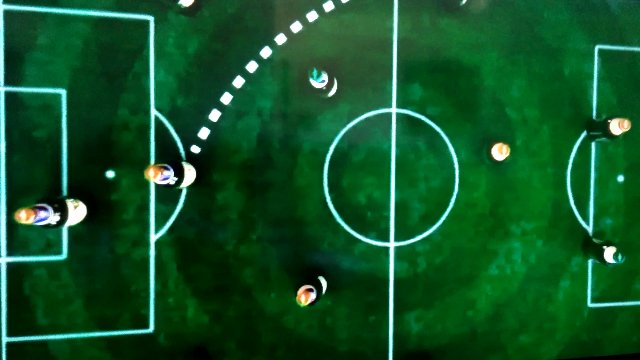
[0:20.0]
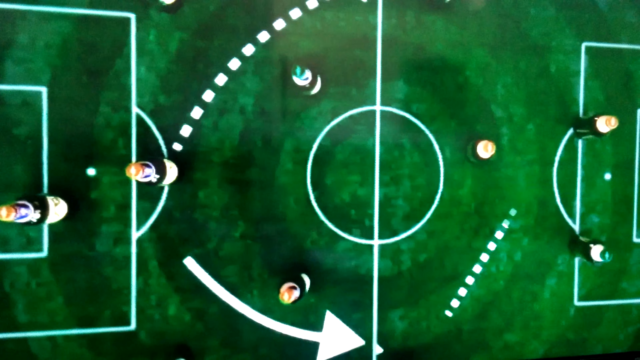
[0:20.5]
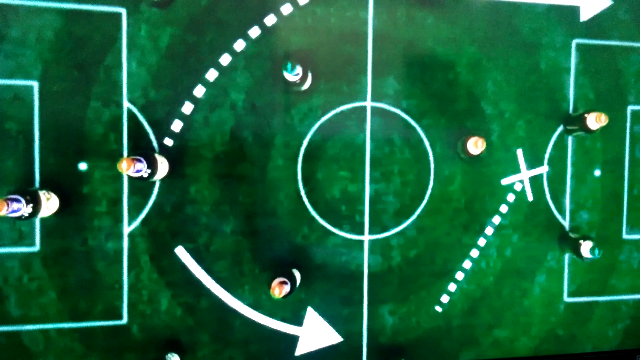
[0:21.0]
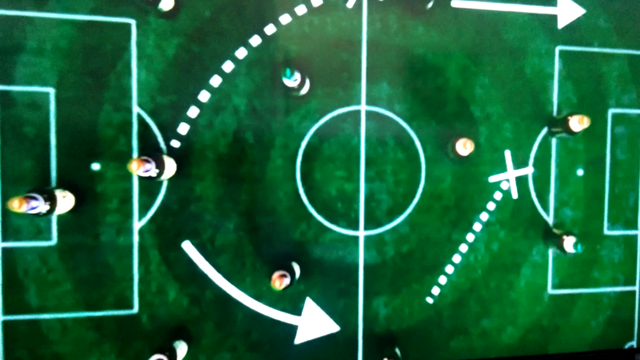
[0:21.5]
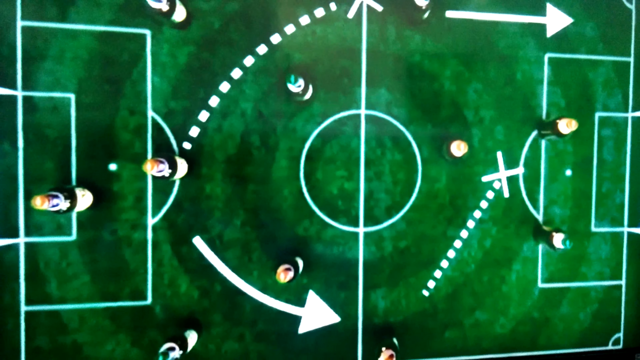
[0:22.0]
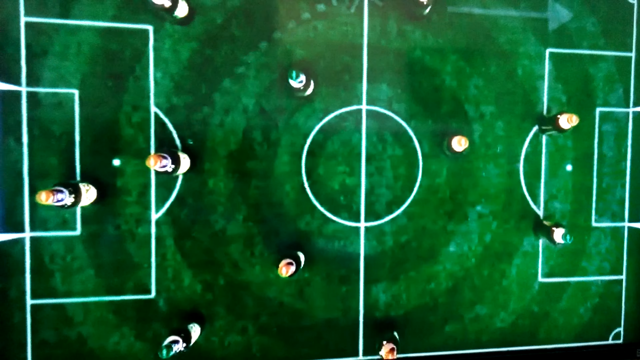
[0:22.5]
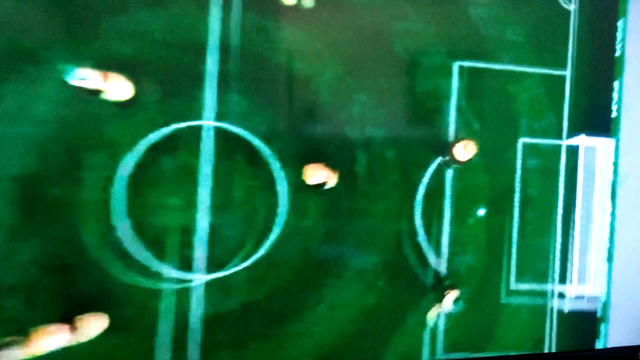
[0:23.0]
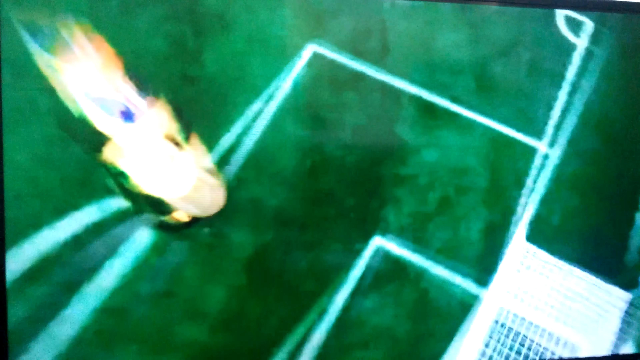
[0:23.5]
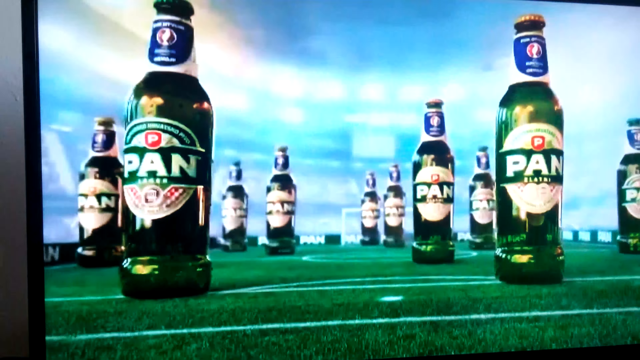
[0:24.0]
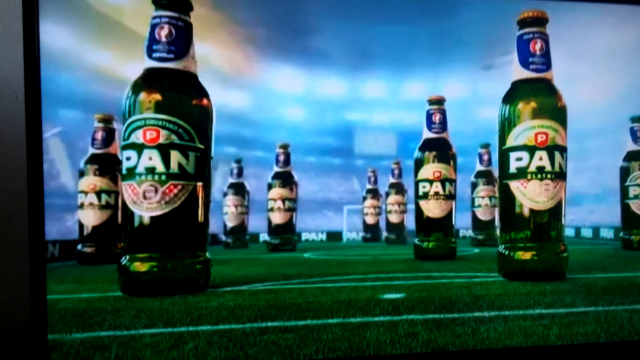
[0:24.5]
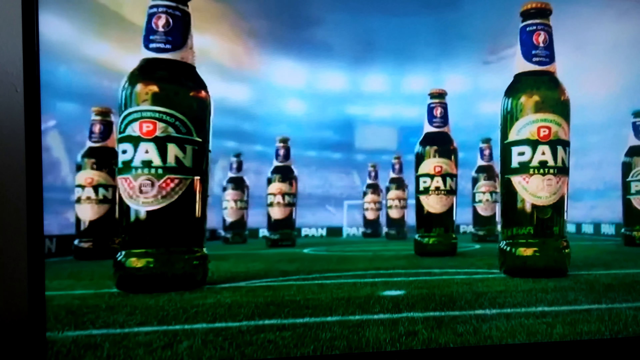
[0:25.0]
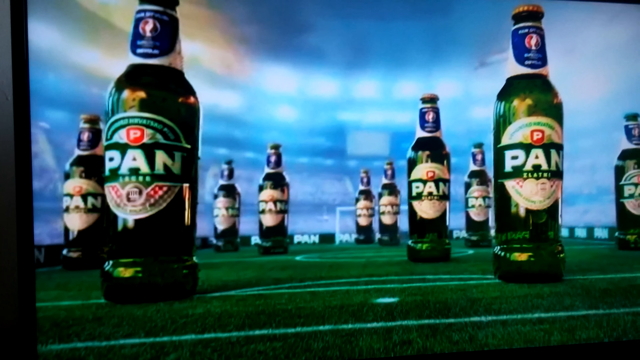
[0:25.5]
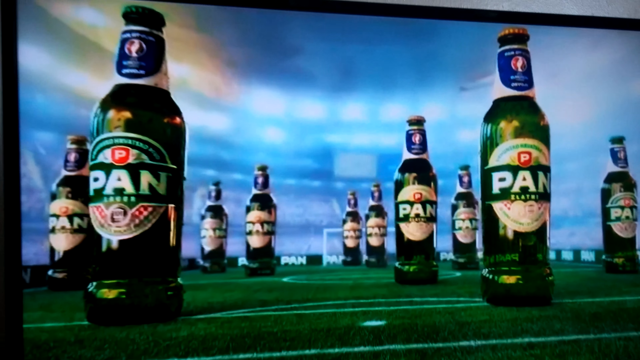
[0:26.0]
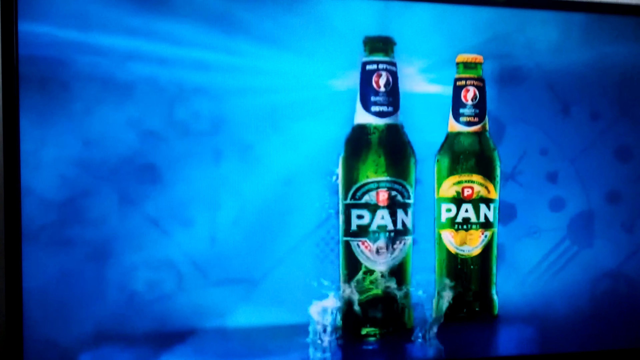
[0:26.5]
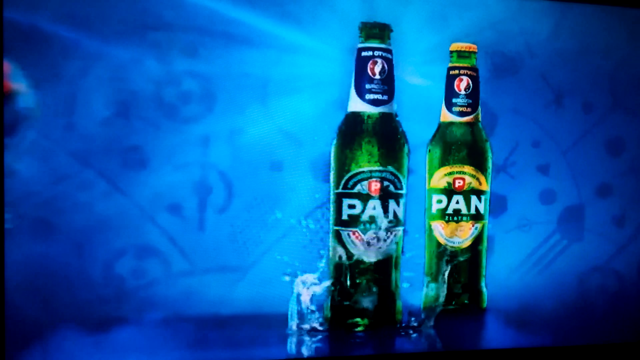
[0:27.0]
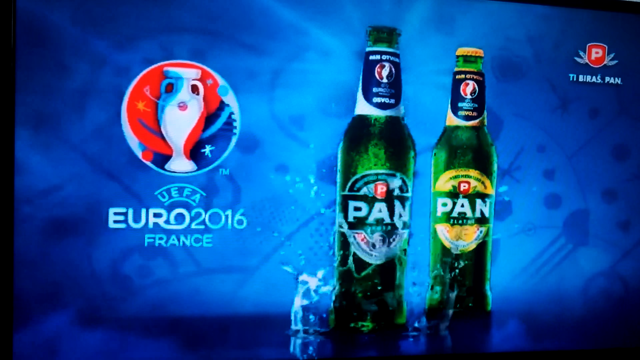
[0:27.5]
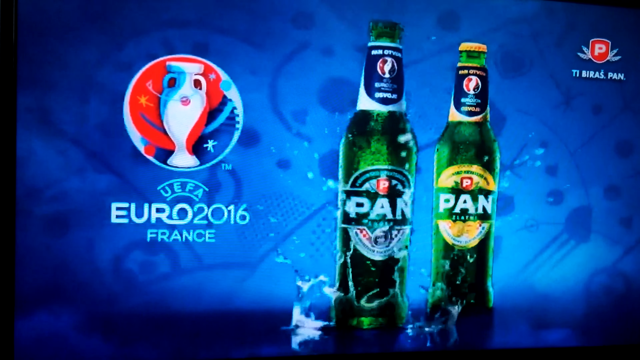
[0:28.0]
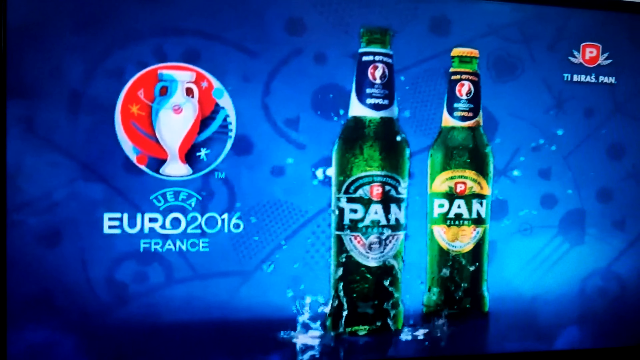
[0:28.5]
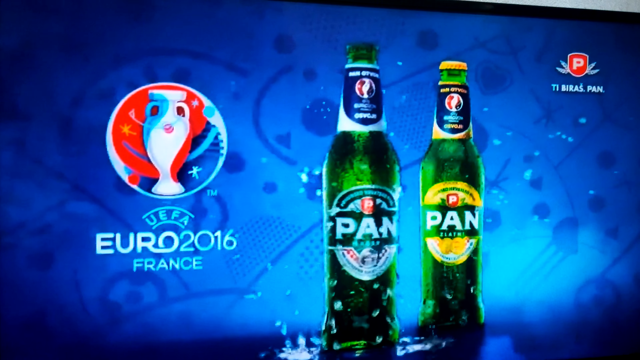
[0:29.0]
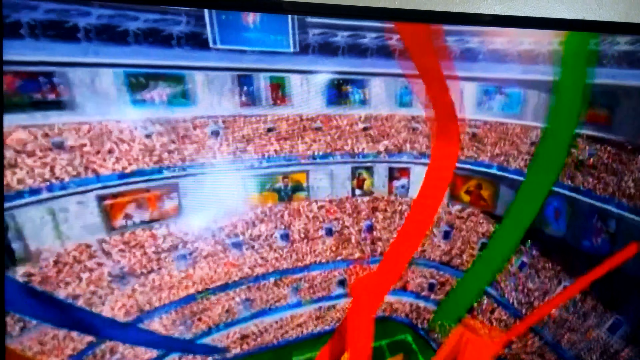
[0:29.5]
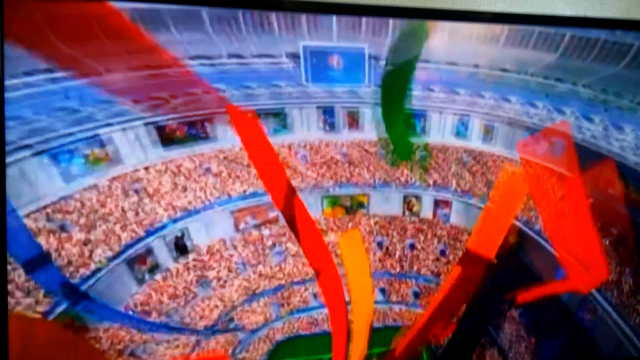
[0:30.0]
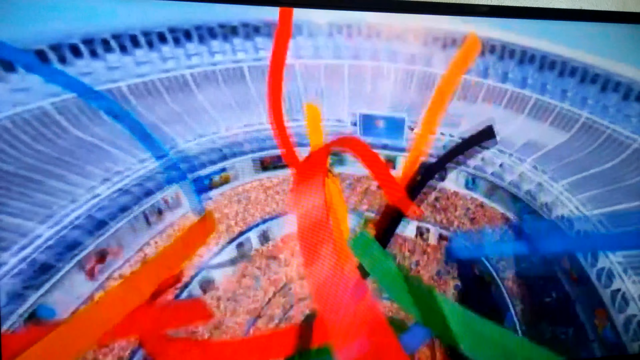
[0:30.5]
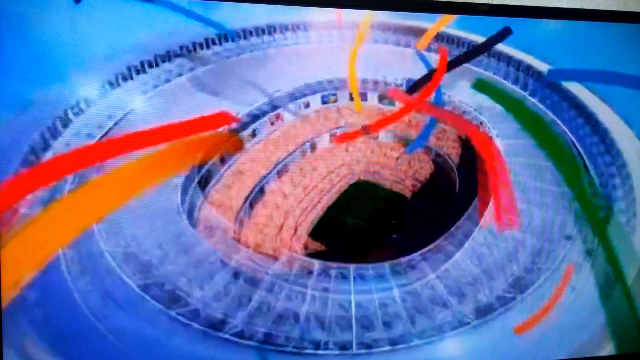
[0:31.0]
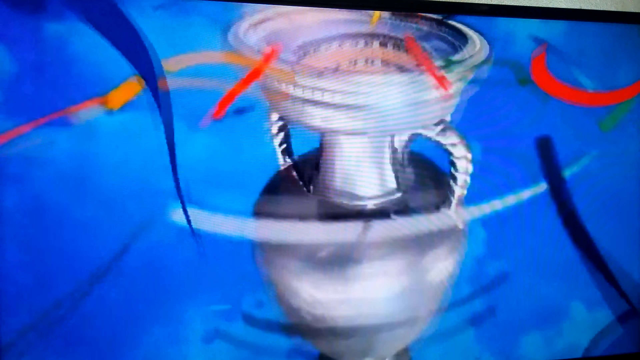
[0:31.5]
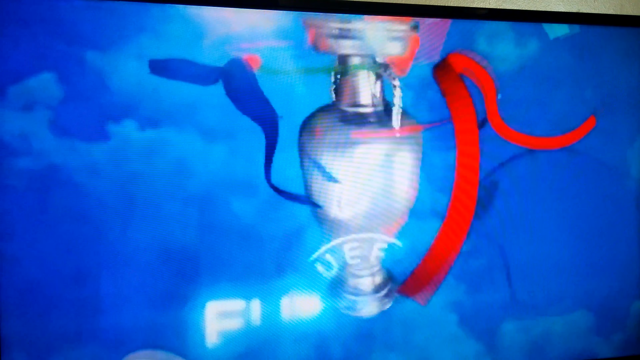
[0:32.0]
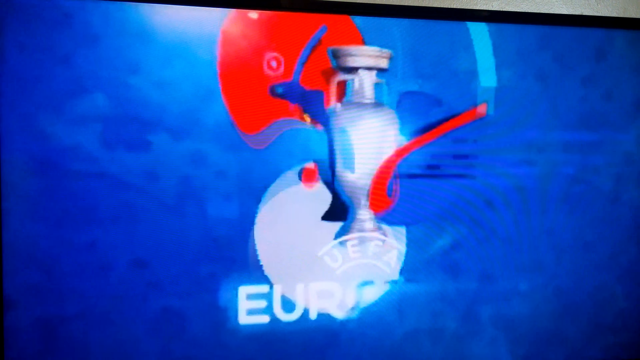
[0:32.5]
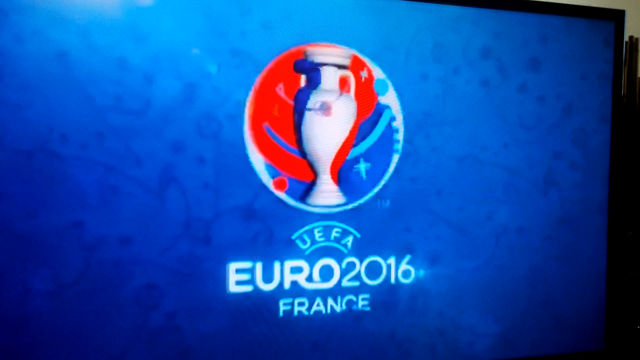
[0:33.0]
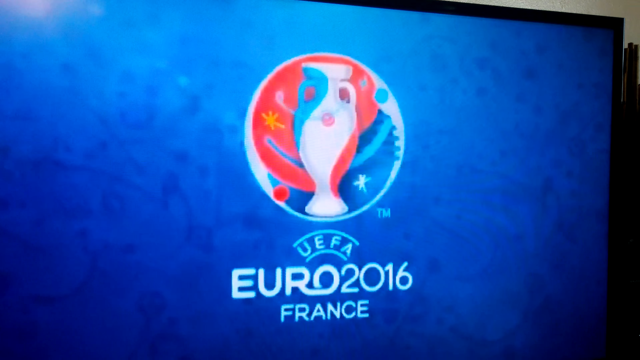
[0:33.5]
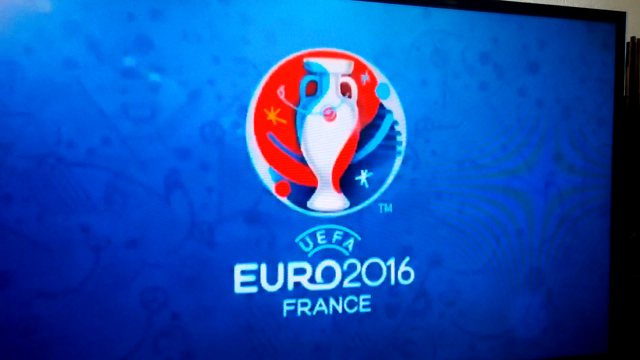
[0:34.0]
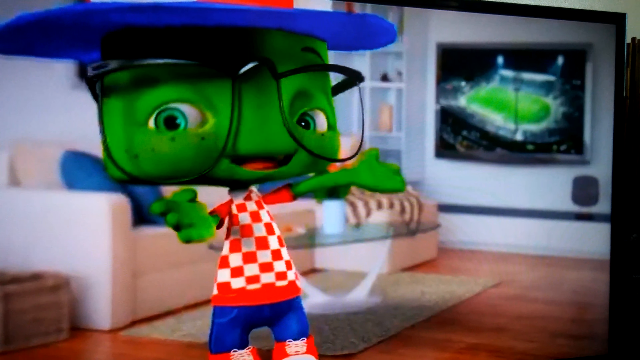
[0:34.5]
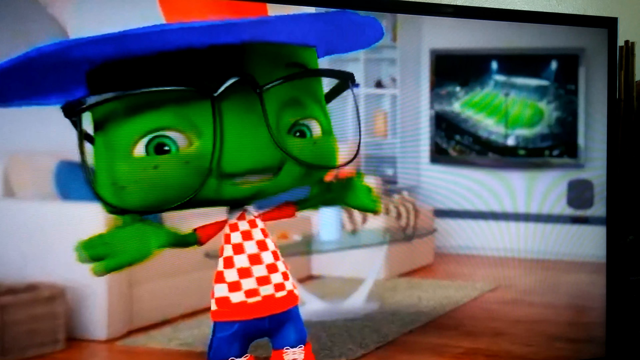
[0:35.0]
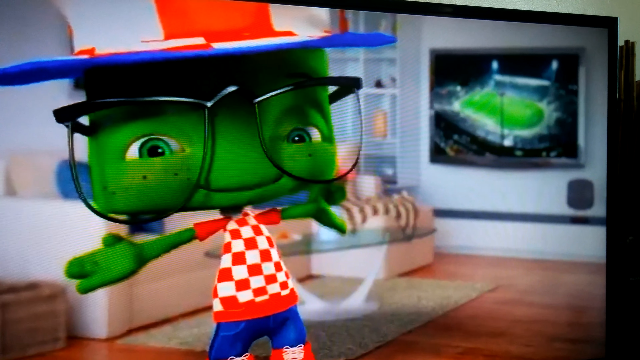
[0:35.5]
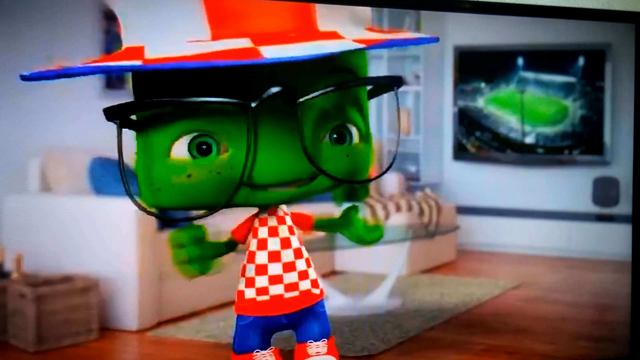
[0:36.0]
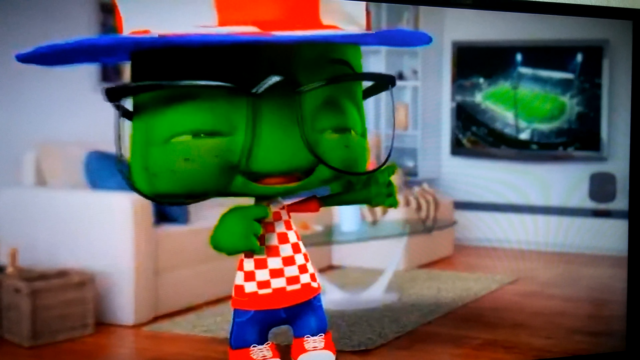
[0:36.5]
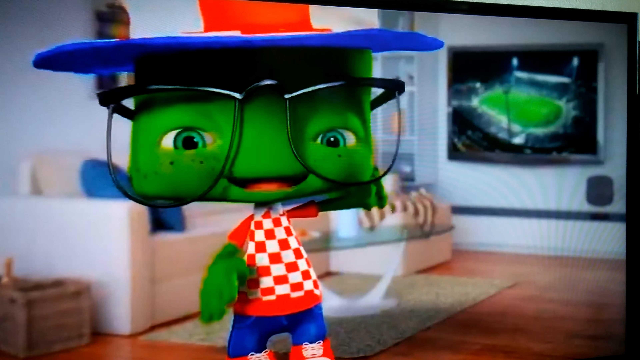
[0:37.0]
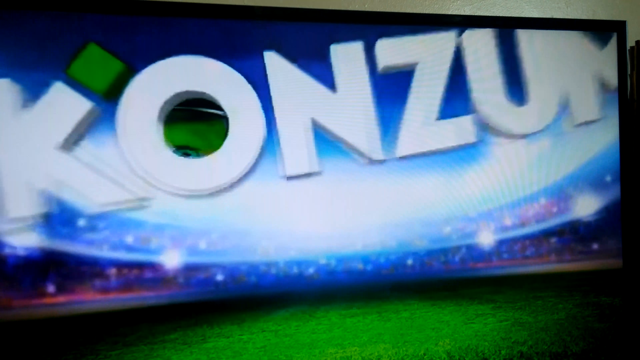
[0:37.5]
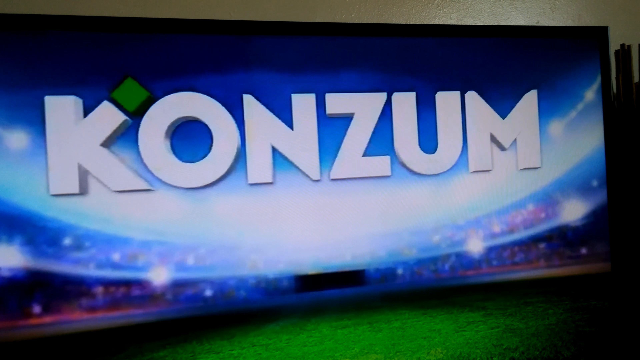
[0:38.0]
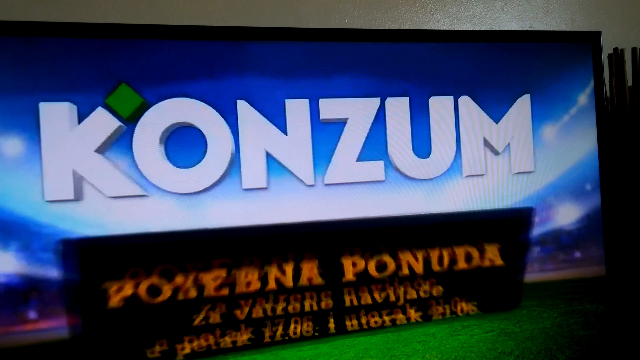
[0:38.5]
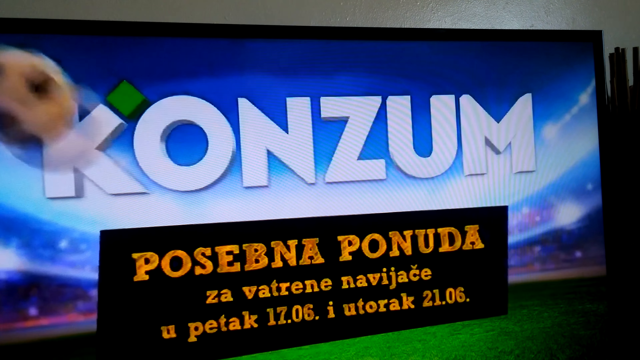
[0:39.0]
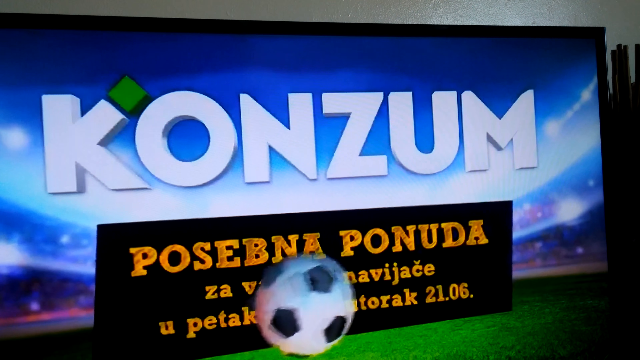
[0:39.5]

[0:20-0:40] A soccer field is shown with pieces of what look like bottles or something on it; it looks like a mock-up of a soccer field showing where everybody's position is. The camera zooms in on the goalie. It appears to be a commercial for a beer called Pan, using Pan beer bottles to represent the players on the field. The camera zooms, and suddenly a different scene shows a bottle of Pan being slammed down onto a table. A logo appears on the screen, and underneath it reads "UEFA Euro 2016 France". In the top right corner is another logo that includes the word "Pan", possibly saying sponsored by Pan in a different language. Computer graphics then show a stadium with confetti pieces flying out of it; the stadium turns into a giant trophy, and the trophy turns into another logo reading "Euro 26 UEFA". Another commercial follows, featuring a little green alien guy wearing an Uncle Sam hat, a checkered shirt and big glasses. He is inside a room with a TV screen in the back showing the soccer game, and he talks to the audience. Suddenly the screen reads "Konzum" and a soccer ball appears on the screen.